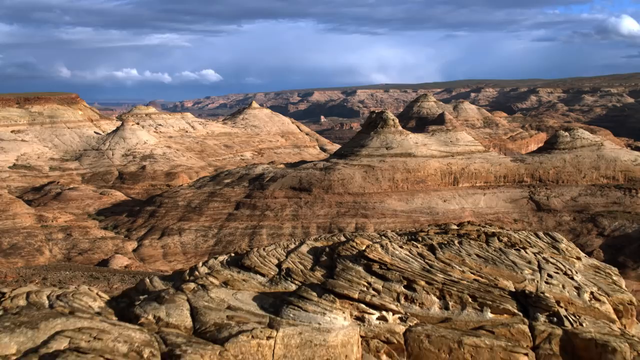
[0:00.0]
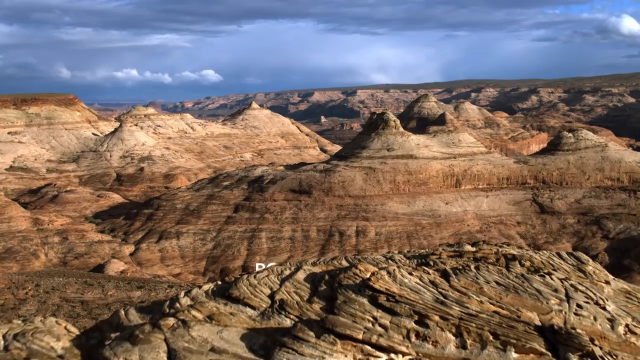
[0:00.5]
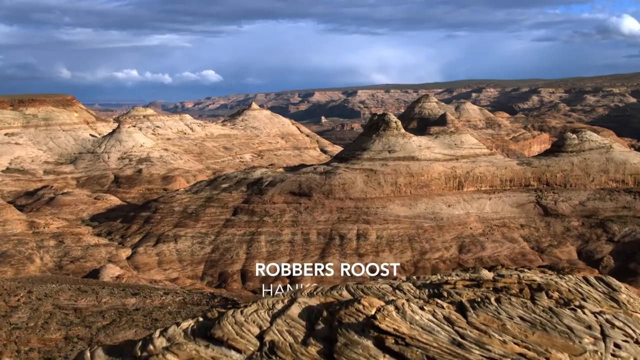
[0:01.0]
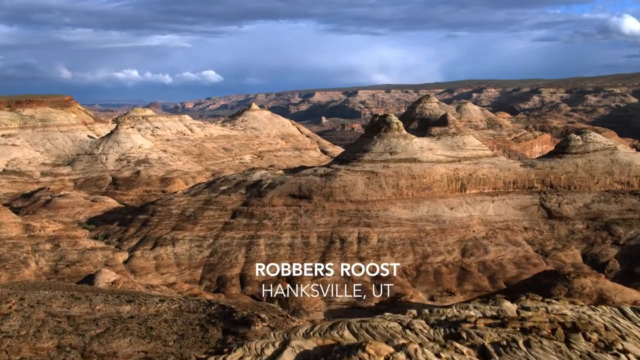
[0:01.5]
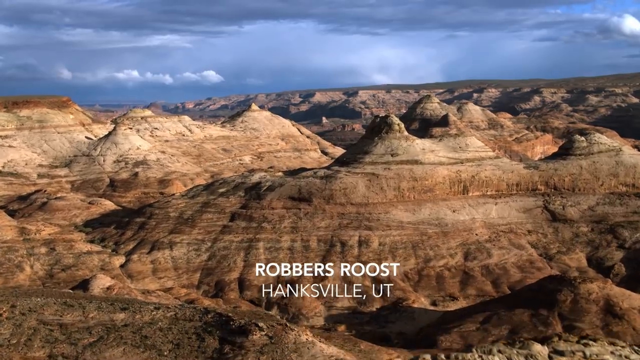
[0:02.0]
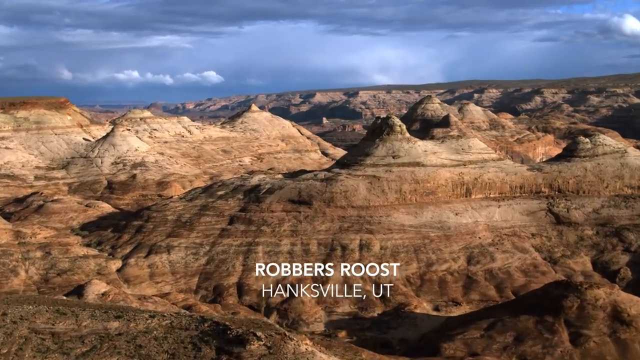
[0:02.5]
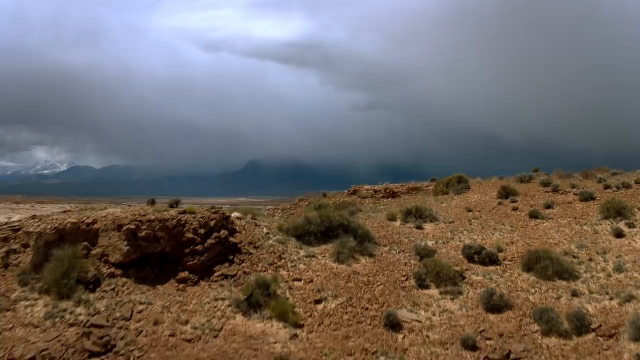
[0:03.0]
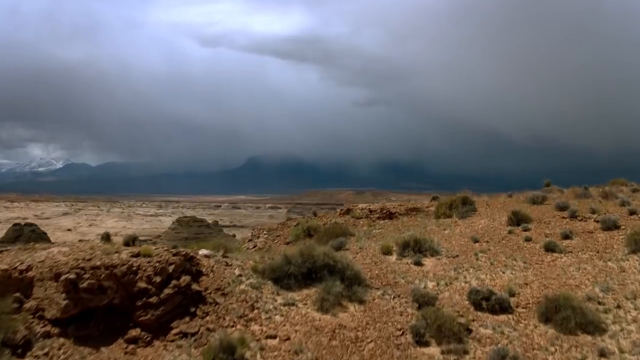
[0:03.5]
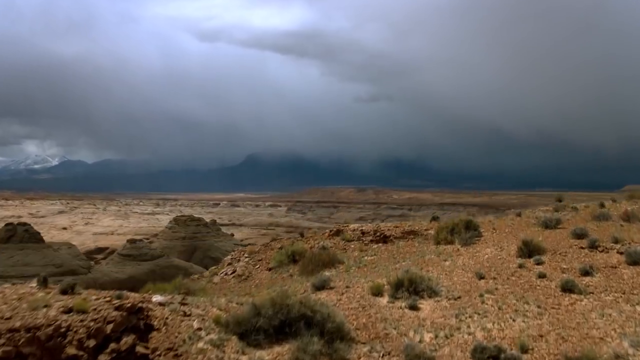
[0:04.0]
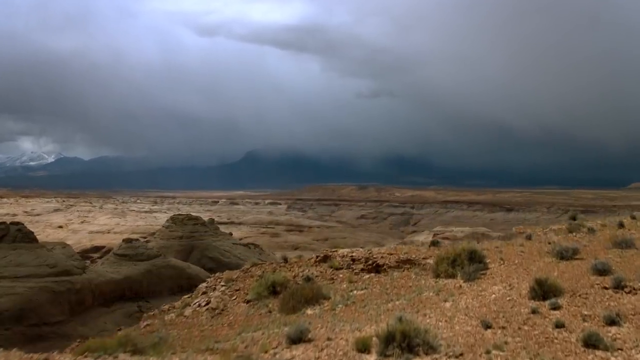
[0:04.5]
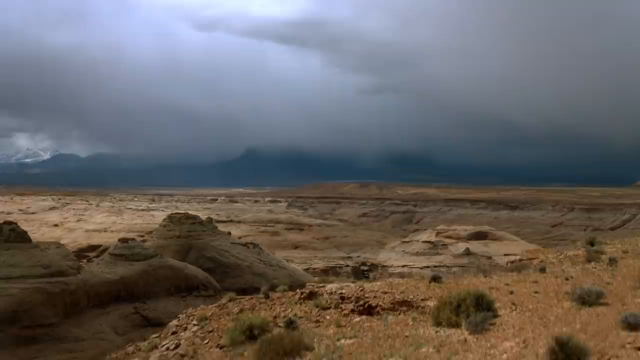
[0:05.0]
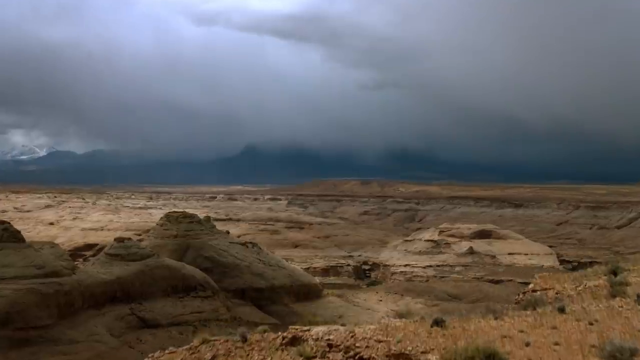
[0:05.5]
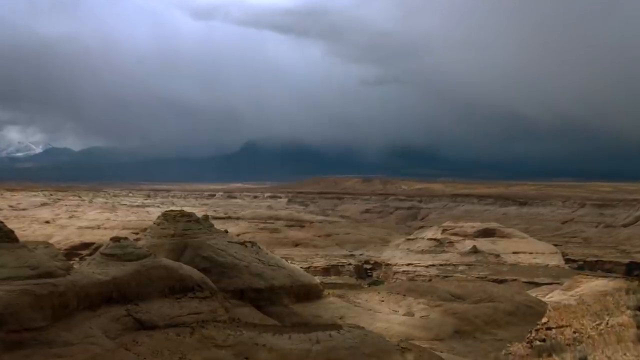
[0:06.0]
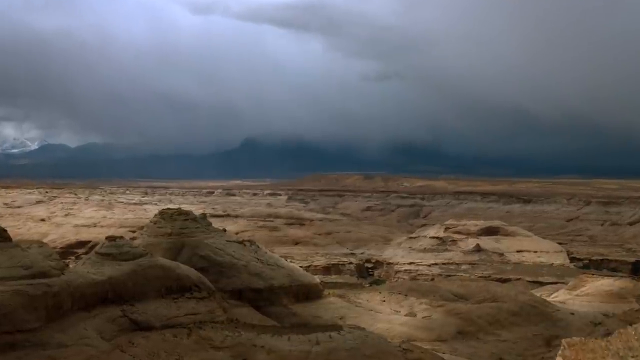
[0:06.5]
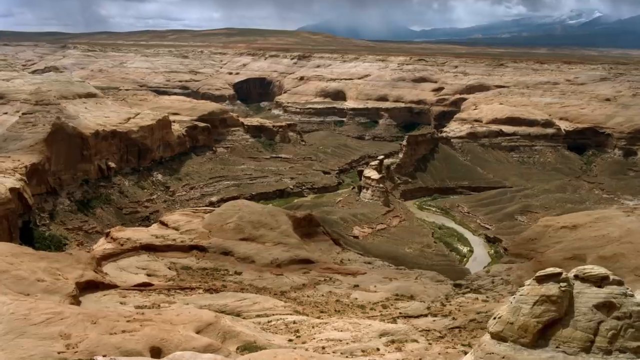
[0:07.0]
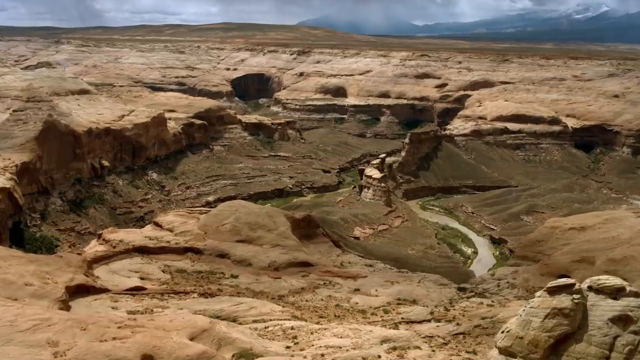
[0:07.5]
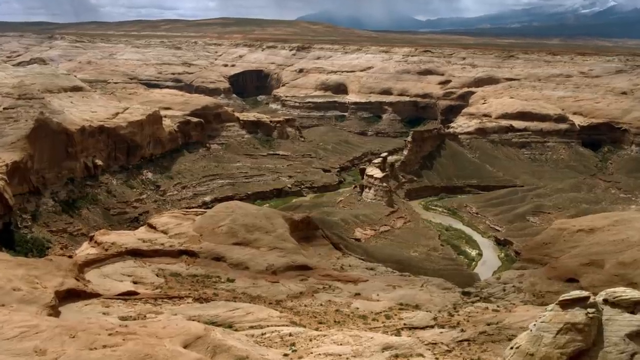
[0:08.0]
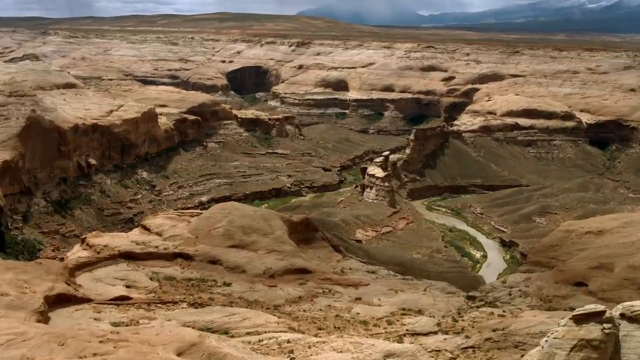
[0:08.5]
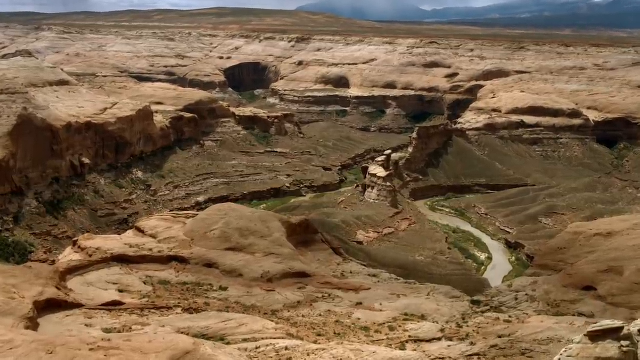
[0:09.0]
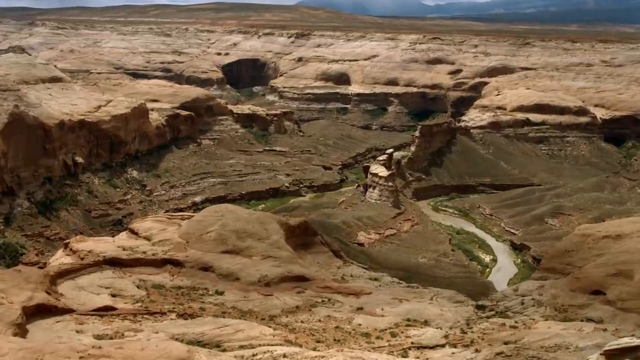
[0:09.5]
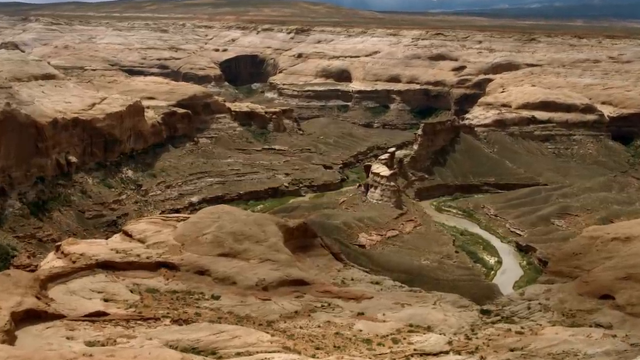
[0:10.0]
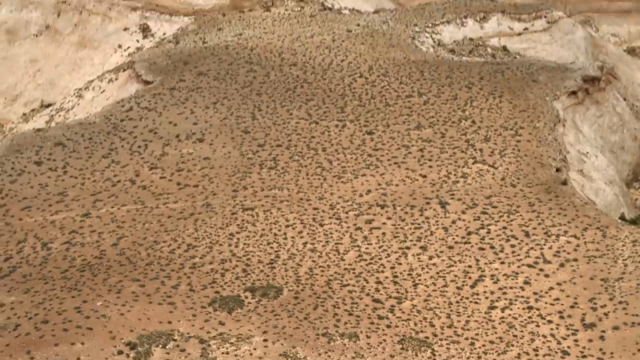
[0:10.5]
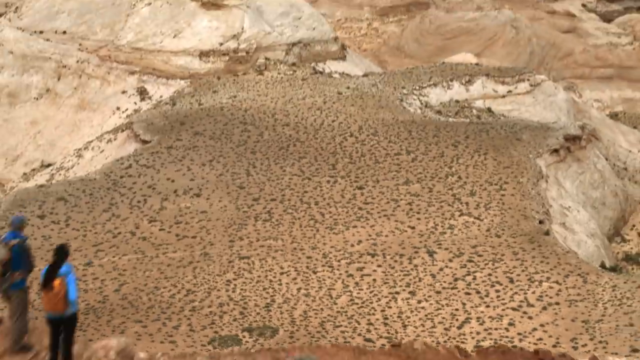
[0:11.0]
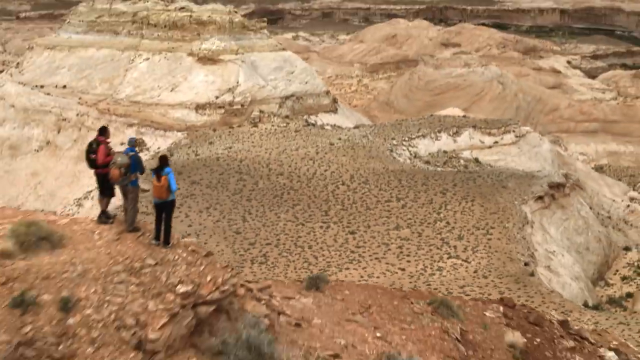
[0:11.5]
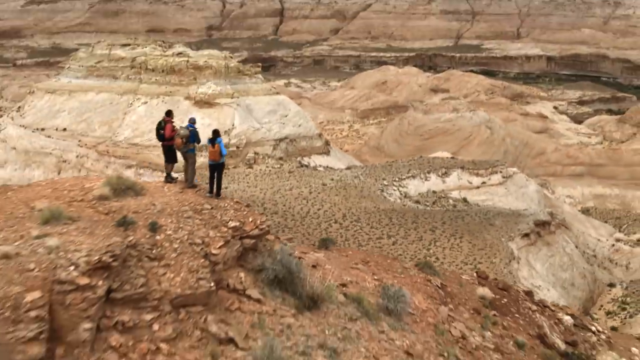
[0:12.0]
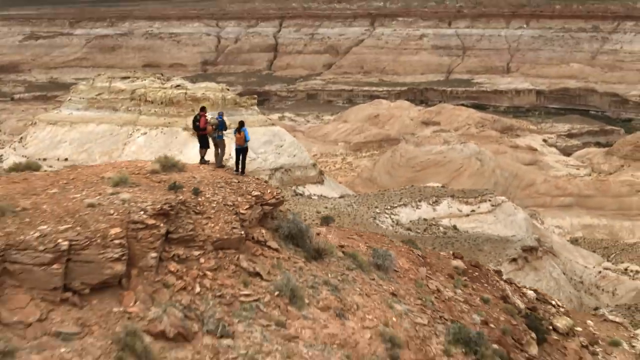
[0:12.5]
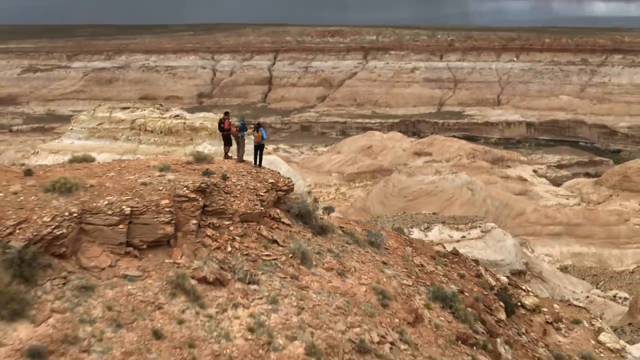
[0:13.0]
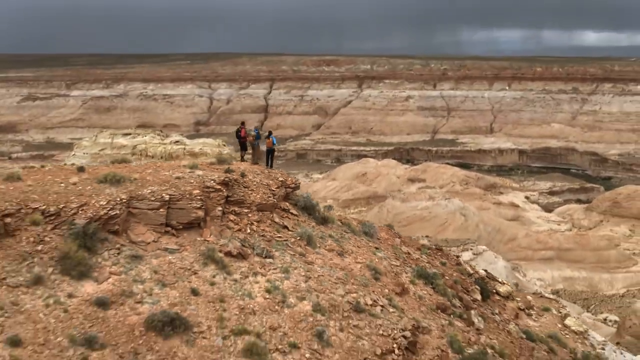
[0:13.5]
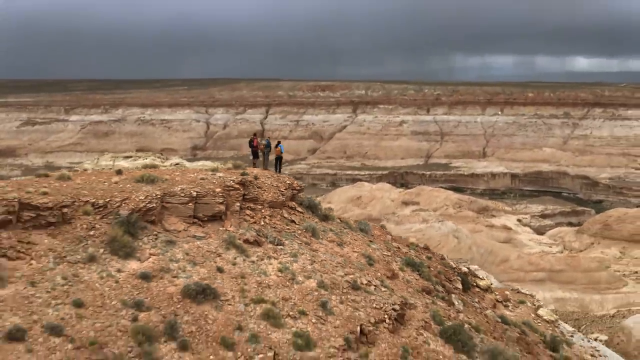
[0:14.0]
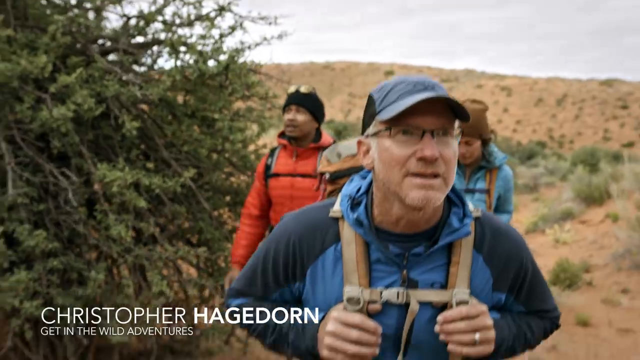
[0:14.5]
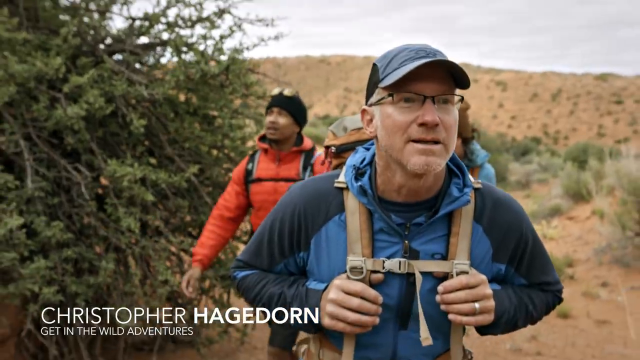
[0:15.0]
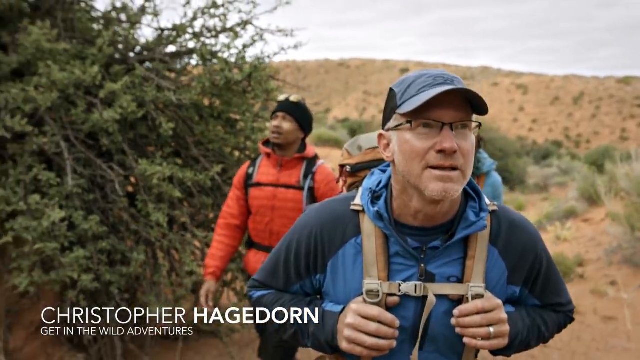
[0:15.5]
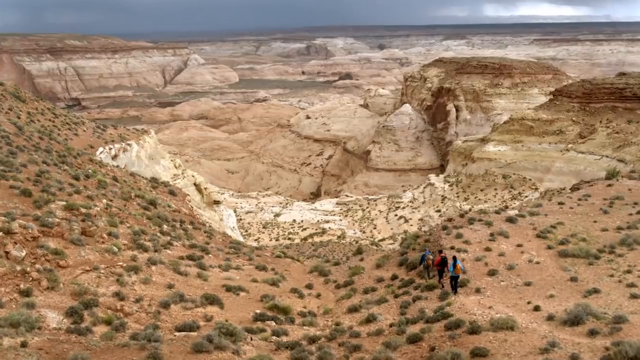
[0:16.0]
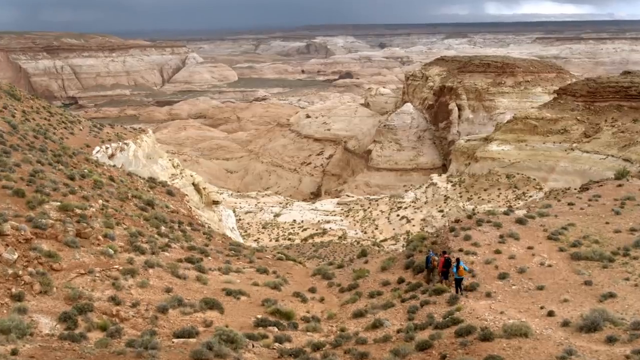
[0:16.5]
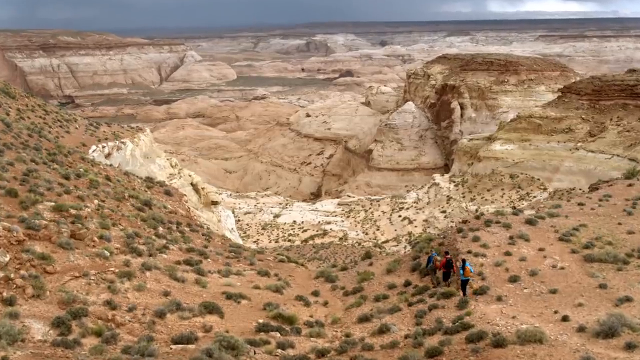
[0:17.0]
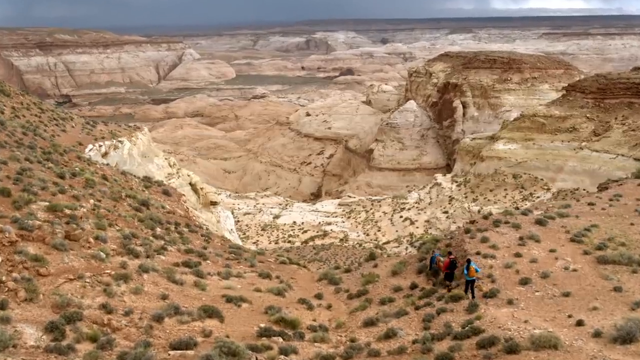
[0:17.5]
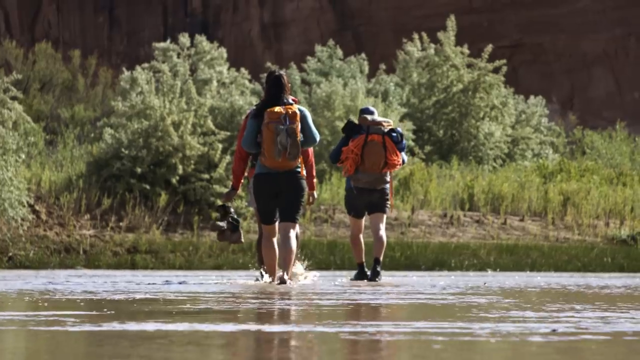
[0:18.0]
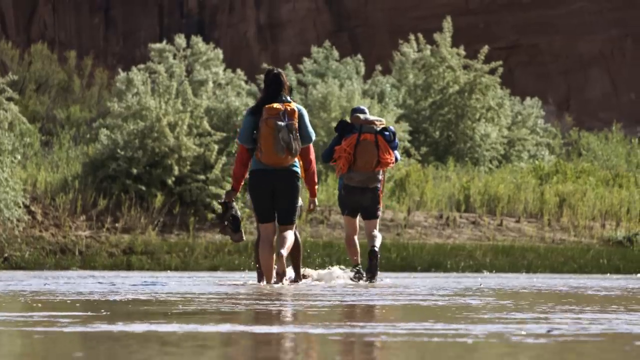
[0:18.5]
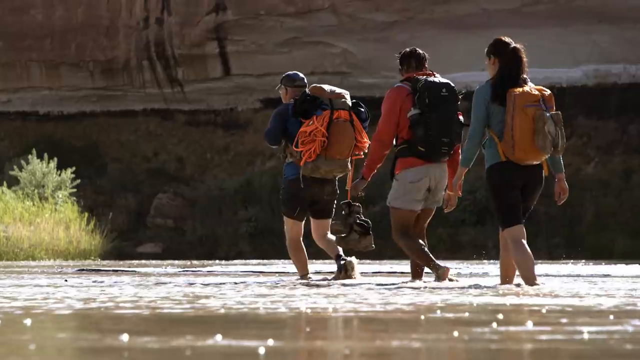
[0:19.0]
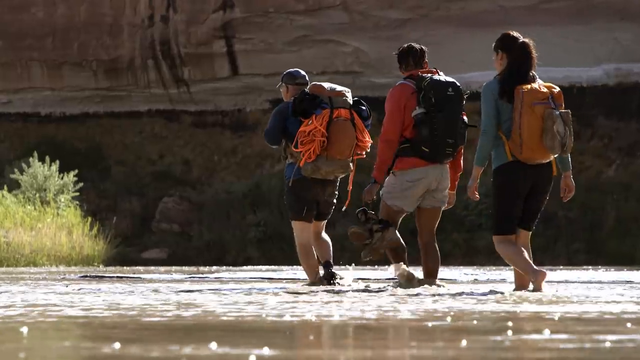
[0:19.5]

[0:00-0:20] A very low structure appears in a dry area of dry land with no water. It seems there was once a canal, a river and a pool of water here that have turned into desert. The land is straight, with a lot of canals, and the area seems huge.